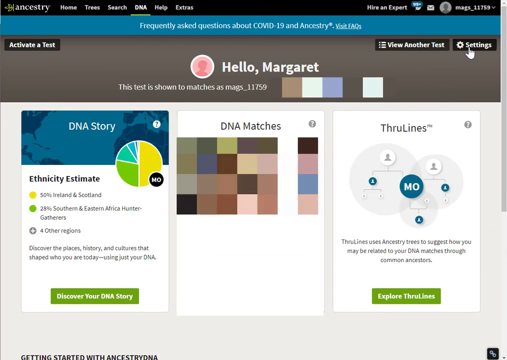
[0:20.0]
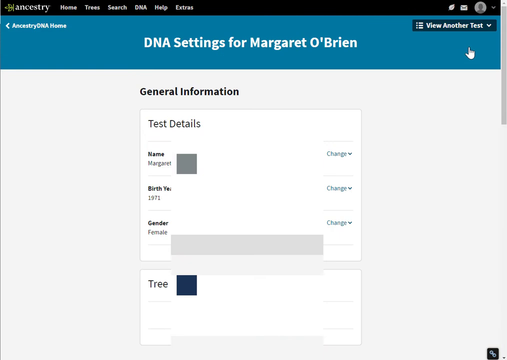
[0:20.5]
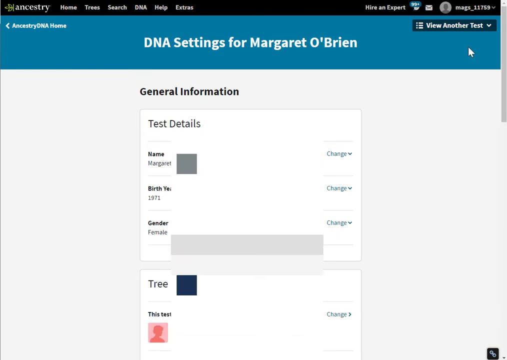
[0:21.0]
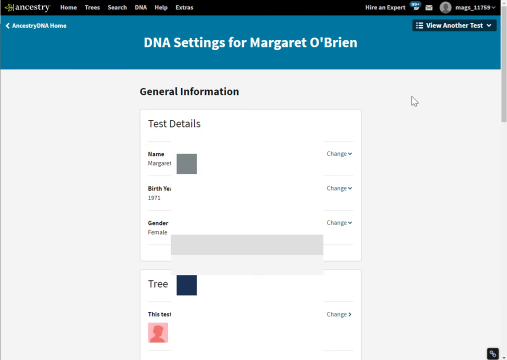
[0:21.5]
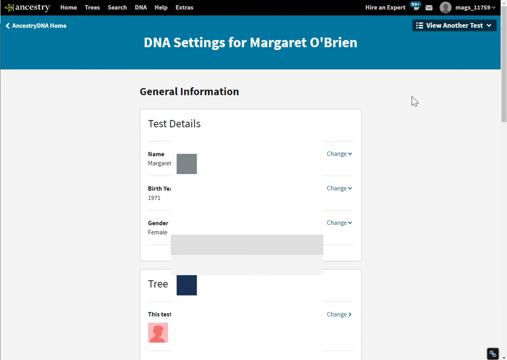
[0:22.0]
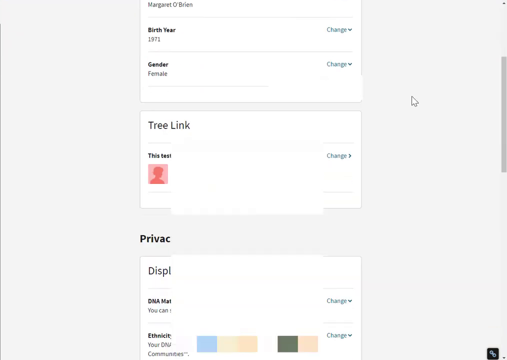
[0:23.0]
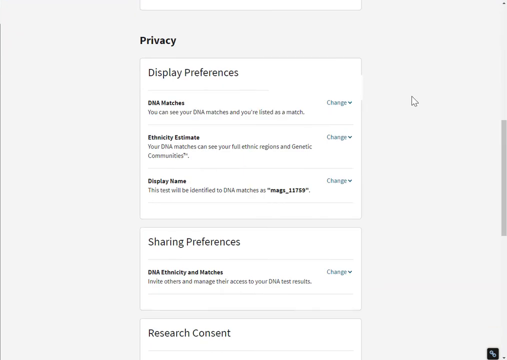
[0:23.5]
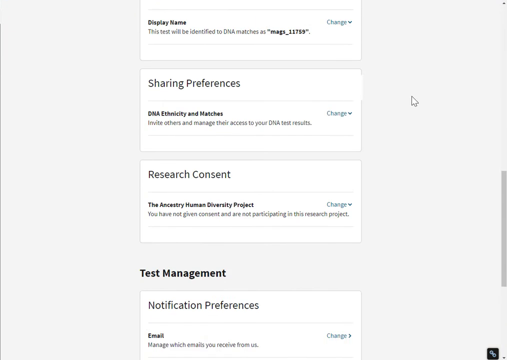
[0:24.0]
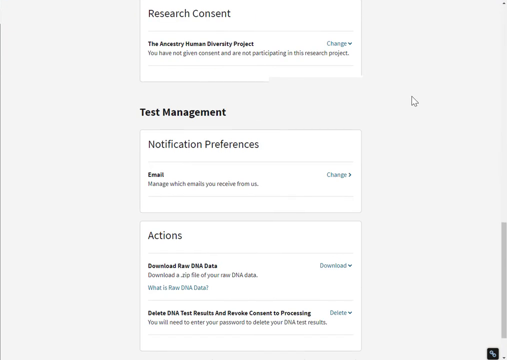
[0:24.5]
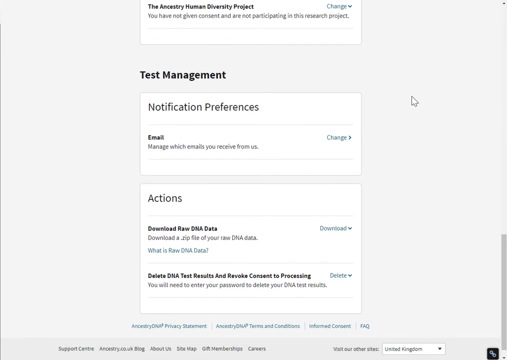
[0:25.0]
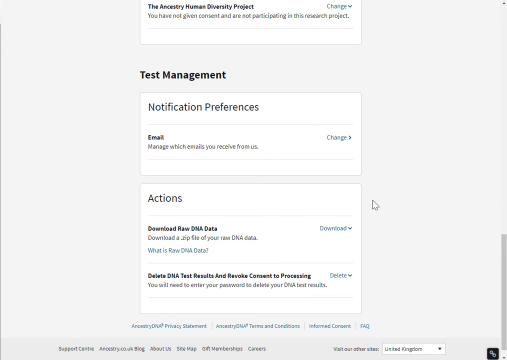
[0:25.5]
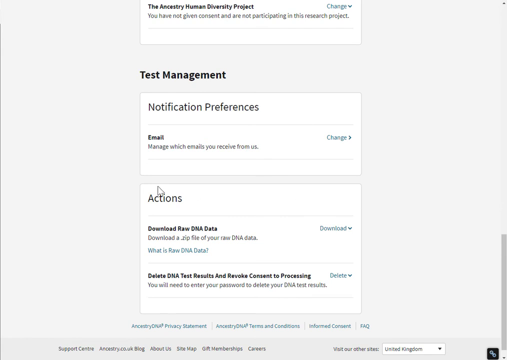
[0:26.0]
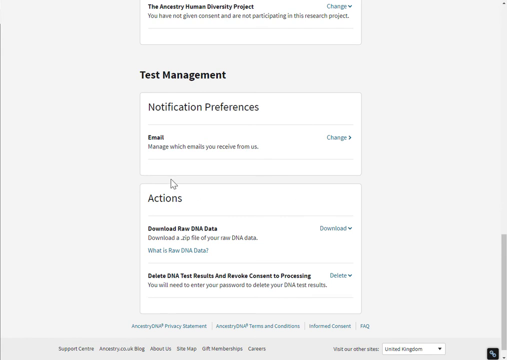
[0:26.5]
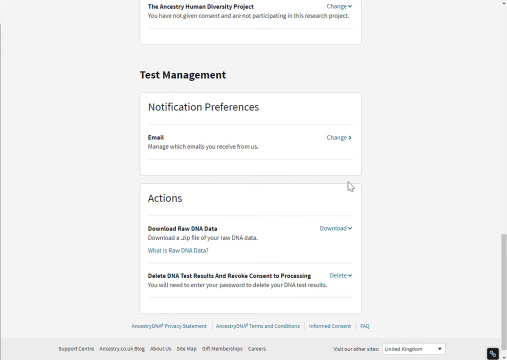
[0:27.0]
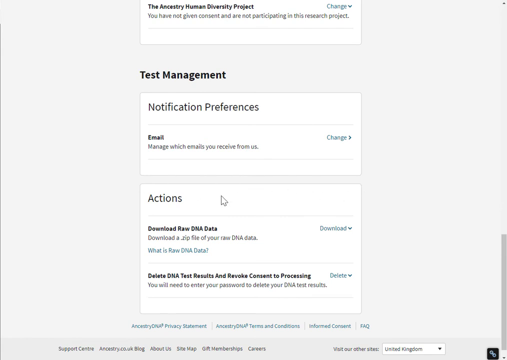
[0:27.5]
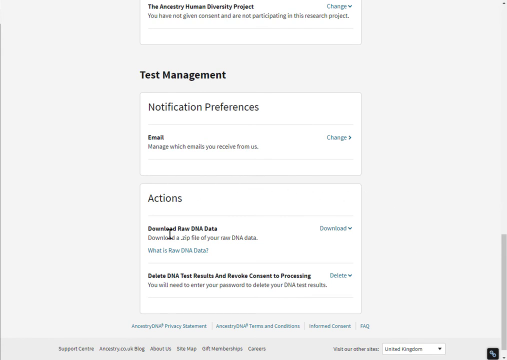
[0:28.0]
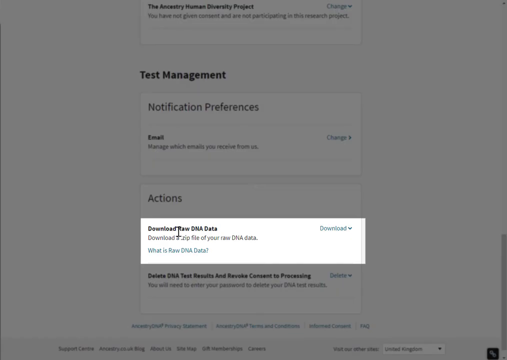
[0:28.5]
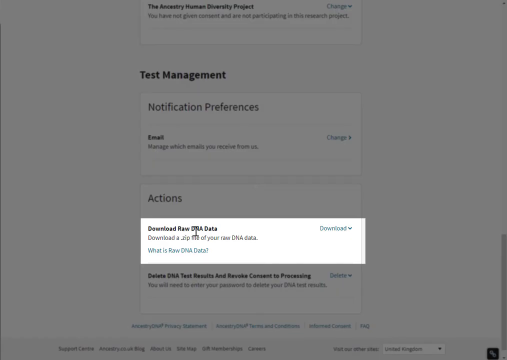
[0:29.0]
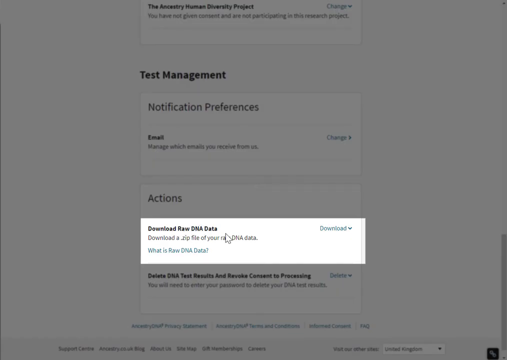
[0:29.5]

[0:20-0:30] The DNA story section has a blue background and an information circle on its right that can apparently be clicked for more information. The pie chart is part of the DNA story blue box, halfway on it and halfway off, and a little black circle labeled "mo" somewhat overlays the yellow part of the chart. "Discovery DNA story" is at the bottom of the DNA story box. In the green middle area is DNA matches, with a group of different colored boxes. Three lines show a lineage, with users at the top and lines coming out to other circles and branching off into others. A green box says "explore through lines." They click settings, which opens DNA settings for Margaret O'Brien, showing her name with a square box blocking out her last name, her birth year, and that she is female. She scrolls down to a box that says "tree," a place to change it. Scrolling further, she looks at and underlines the test management box, where the email can be changed by clicking "change" in blue. Then they look at the action box; a box pops out while everything else fades to gray, and it says "download raw dna data."